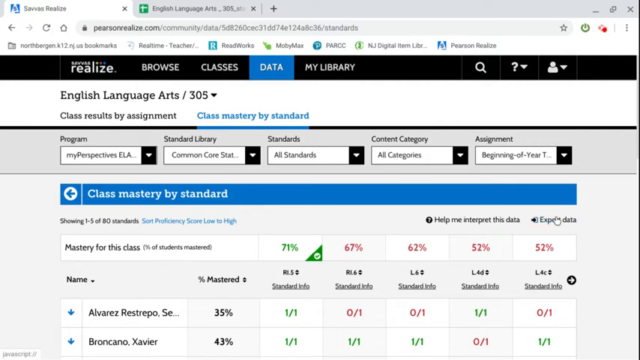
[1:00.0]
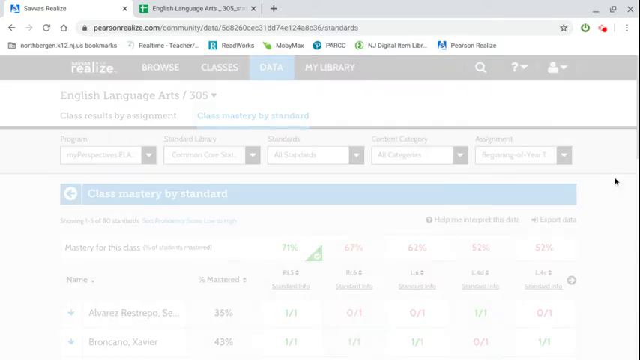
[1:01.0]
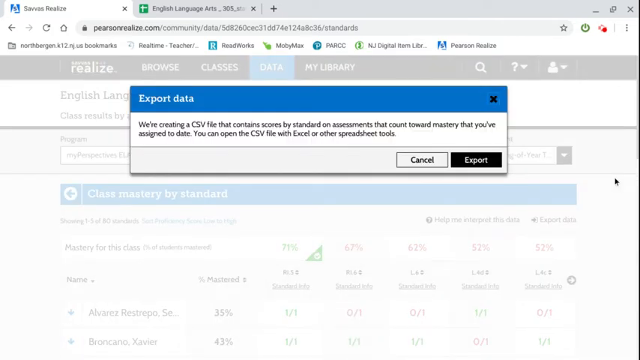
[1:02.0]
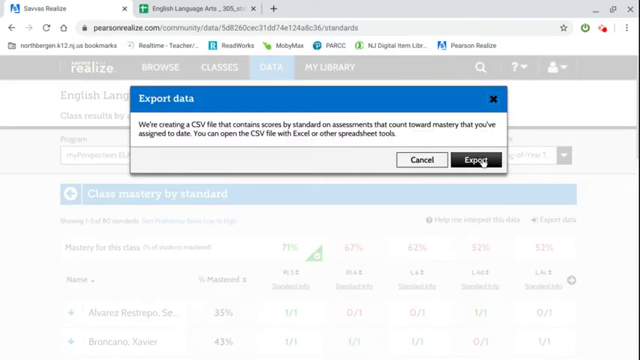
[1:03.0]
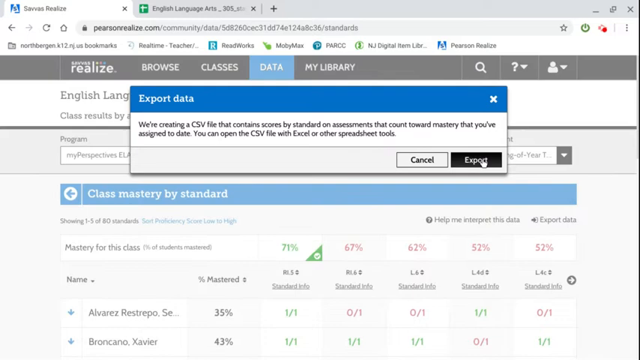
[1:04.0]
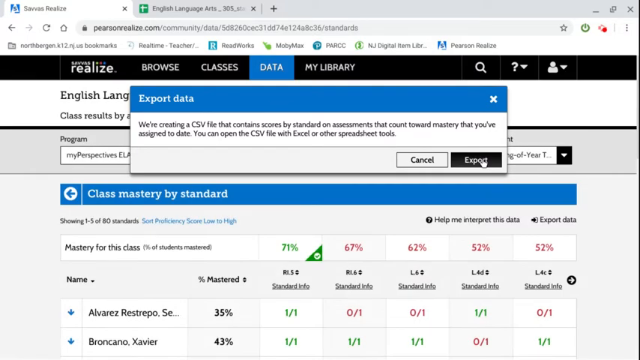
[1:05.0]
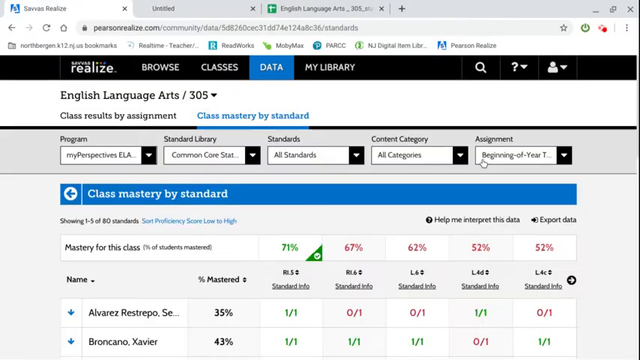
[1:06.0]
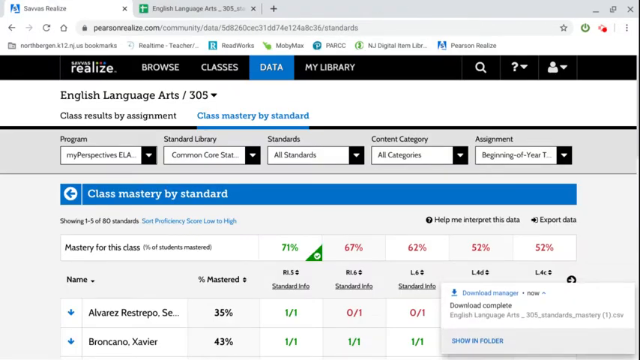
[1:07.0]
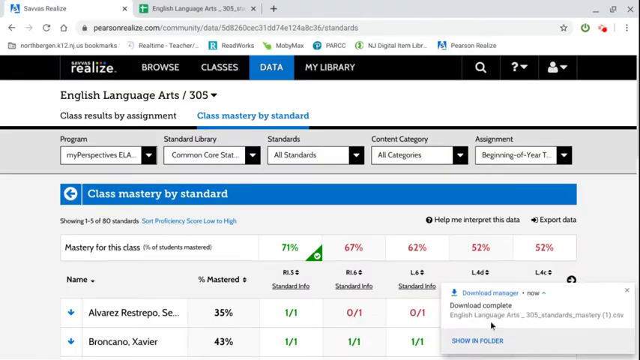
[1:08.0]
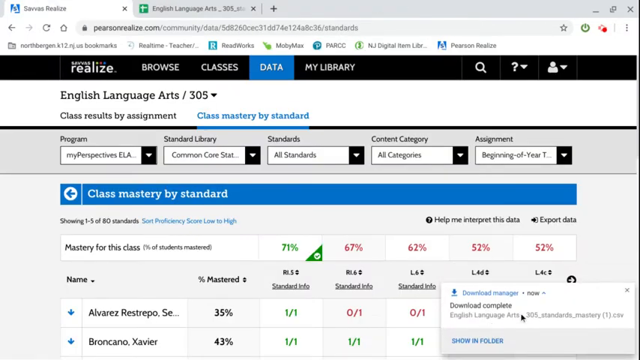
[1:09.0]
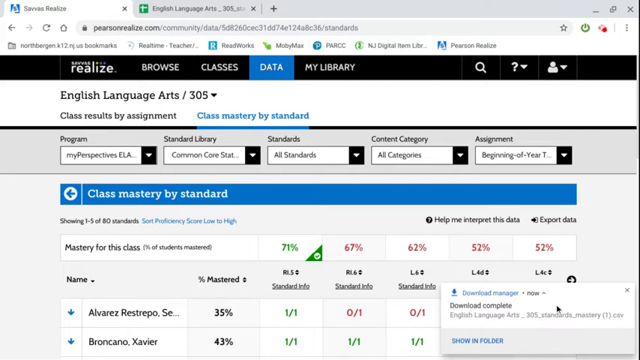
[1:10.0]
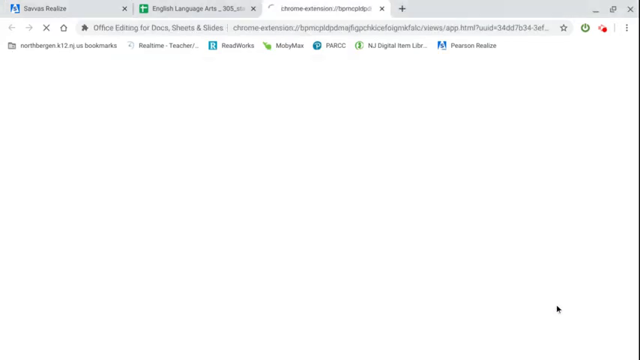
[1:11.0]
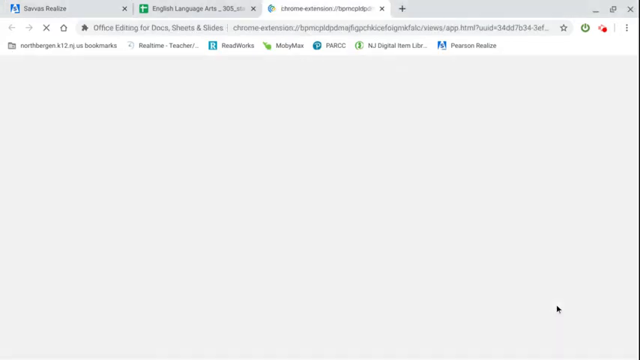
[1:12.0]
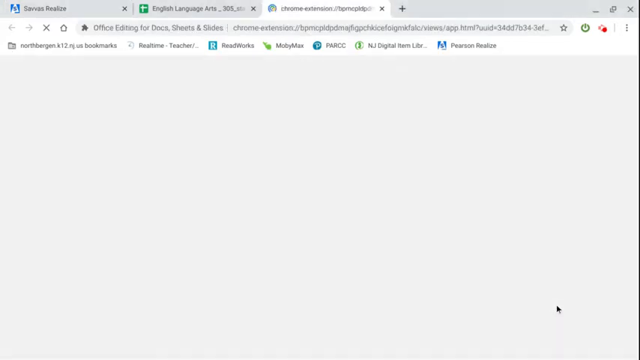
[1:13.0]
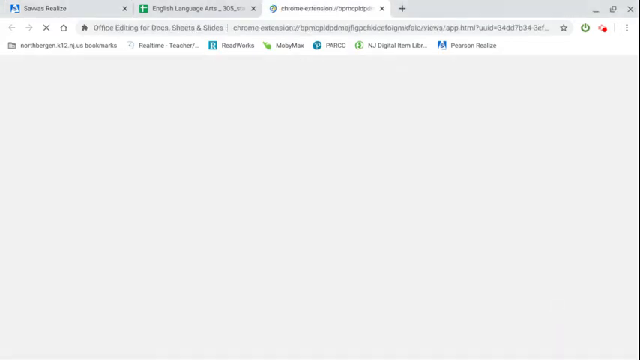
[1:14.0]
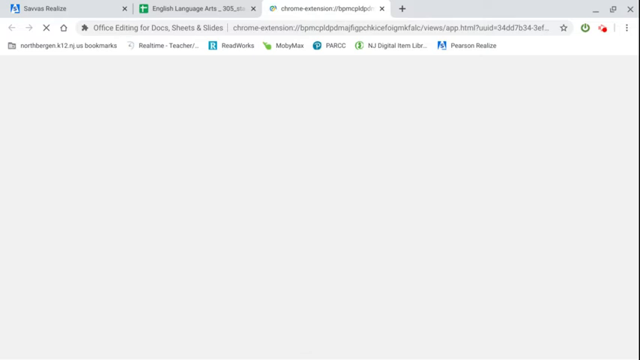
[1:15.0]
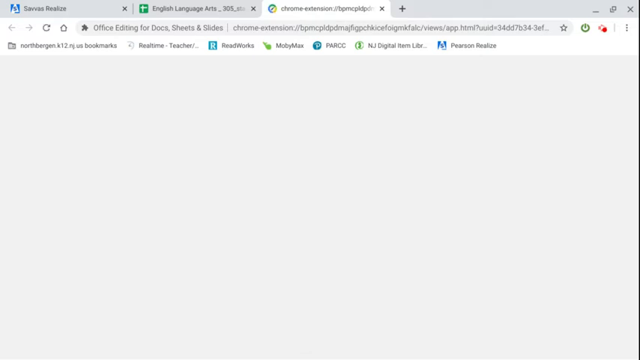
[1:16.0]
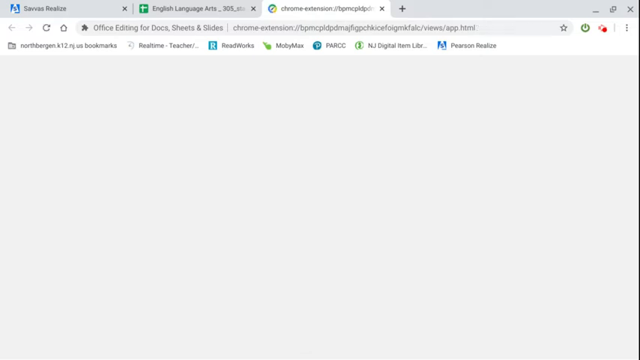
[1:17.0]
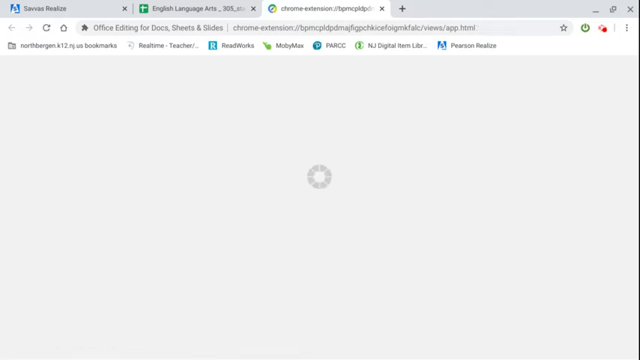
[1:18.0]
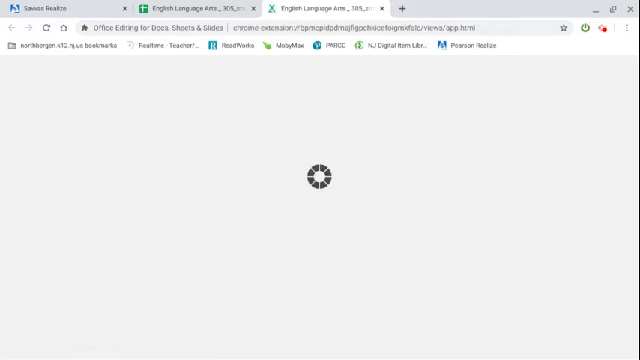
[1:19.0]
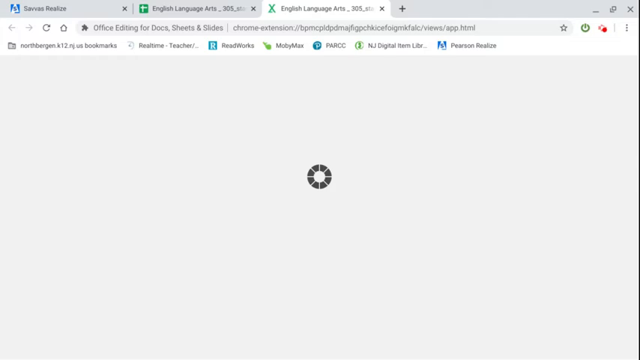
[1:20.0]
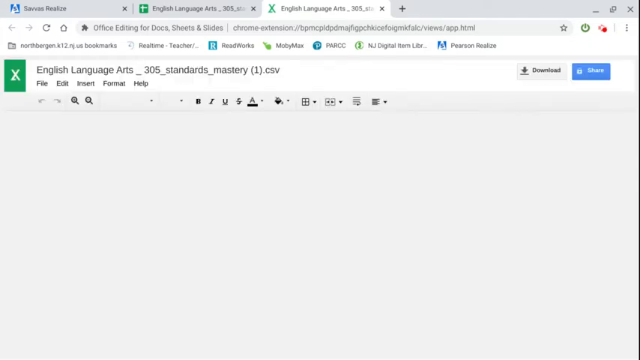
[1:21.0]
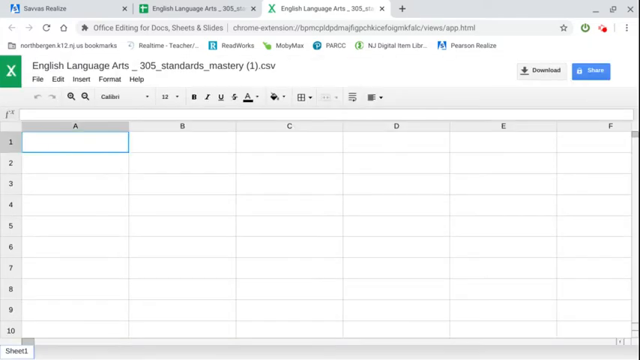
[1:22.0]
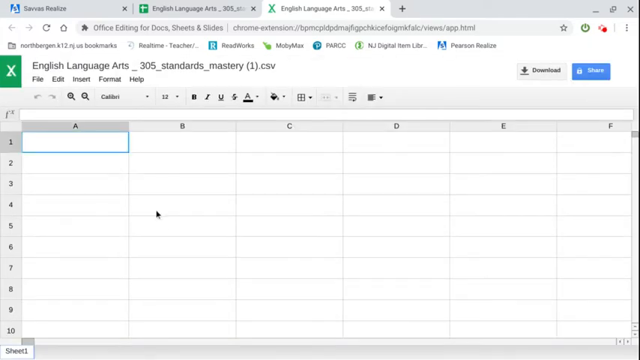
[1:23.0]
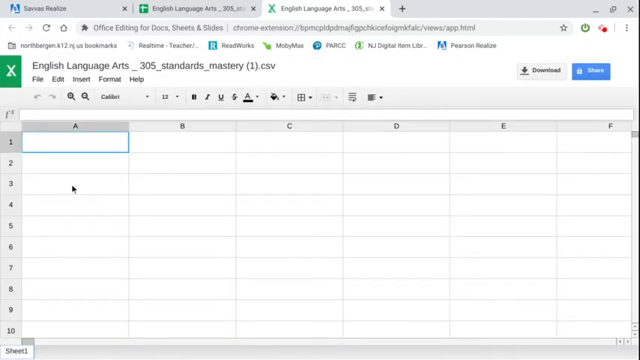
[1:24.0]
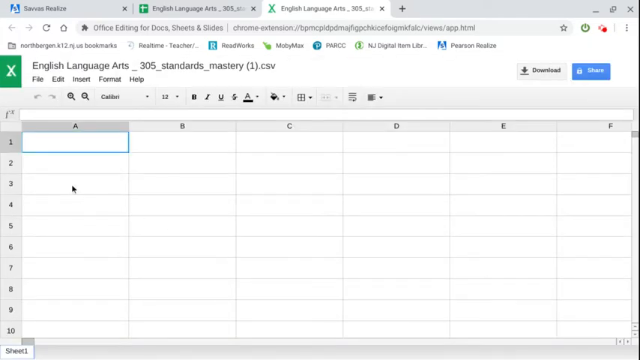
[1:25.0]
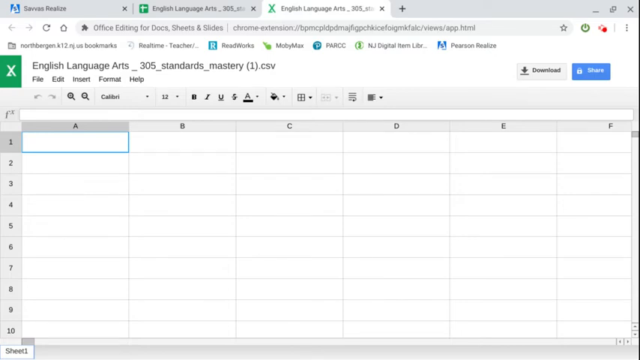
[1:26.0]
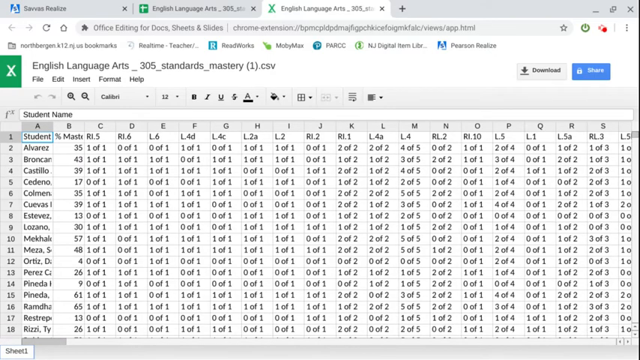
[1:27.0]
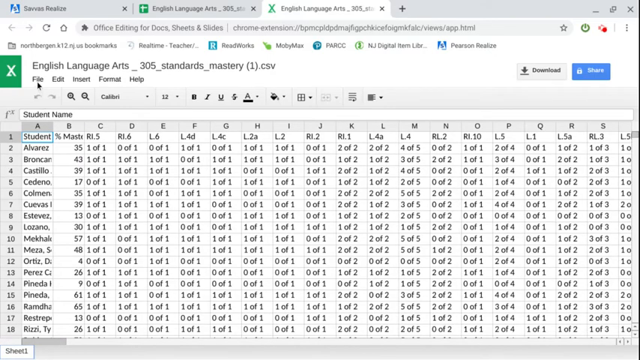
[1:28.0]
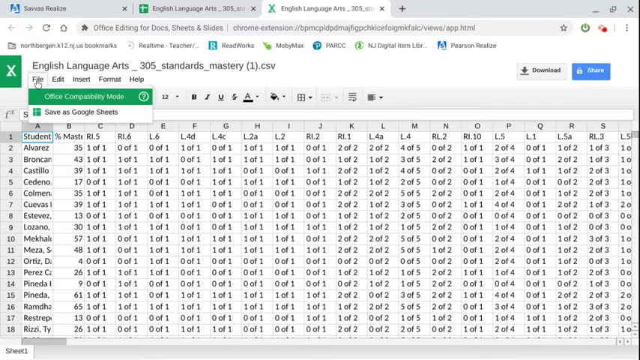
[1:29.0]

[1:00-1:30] On the "Class Mastery by Standard" page, the user apparently clicks an export data command on the right-hand side and downloads the file. The English Language Arts mastery file then looks to be opened, in what looks like a Google Sheet or an Excel sheet, showing the different scores.